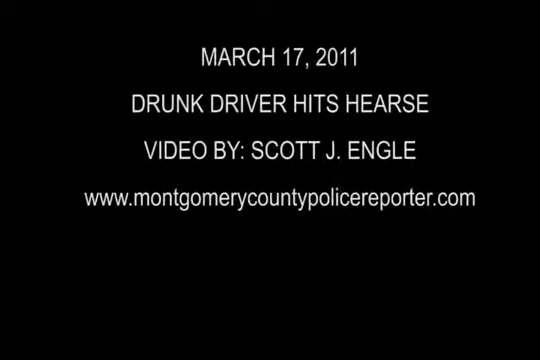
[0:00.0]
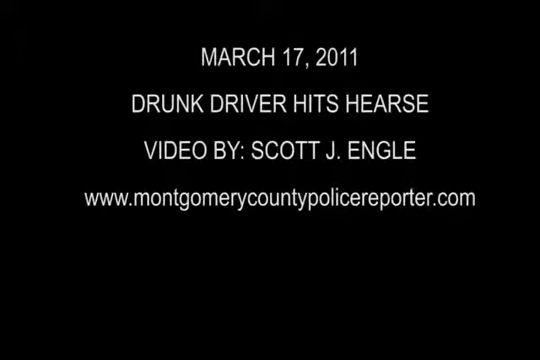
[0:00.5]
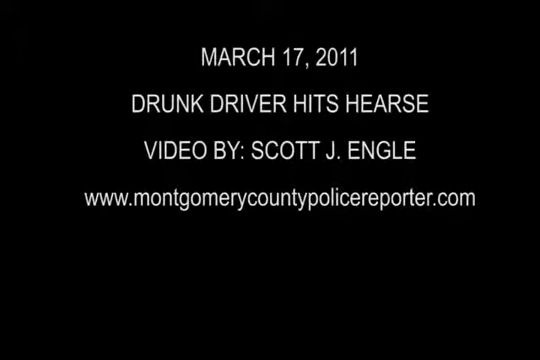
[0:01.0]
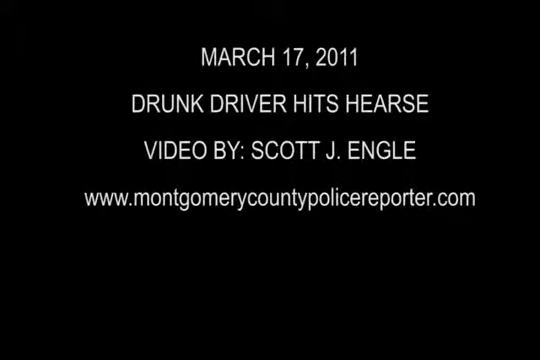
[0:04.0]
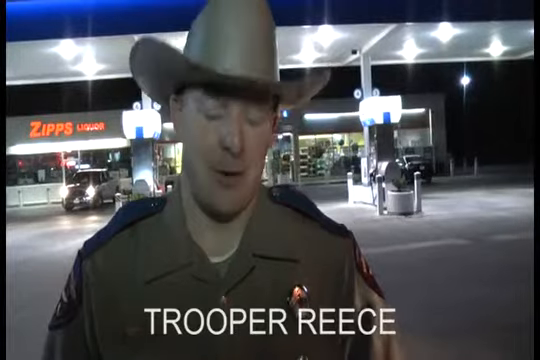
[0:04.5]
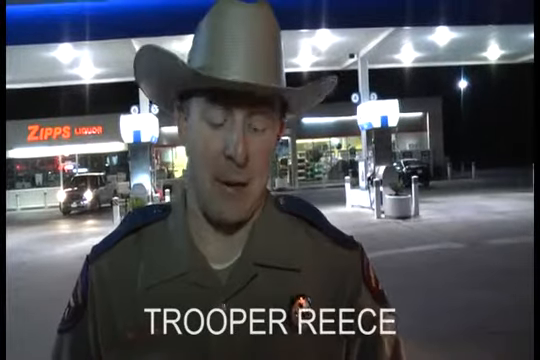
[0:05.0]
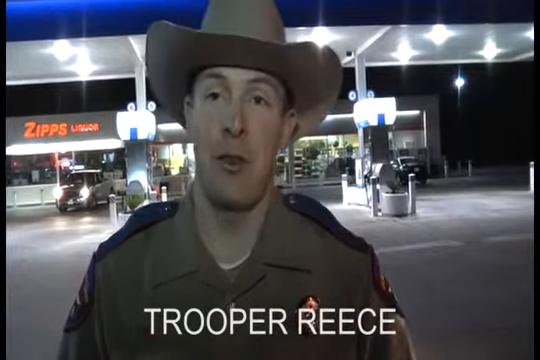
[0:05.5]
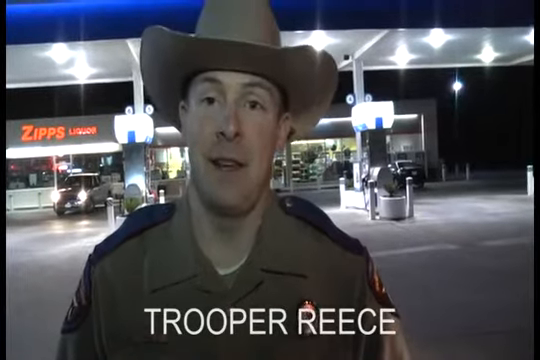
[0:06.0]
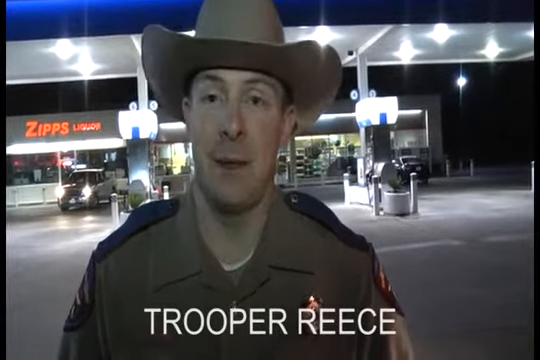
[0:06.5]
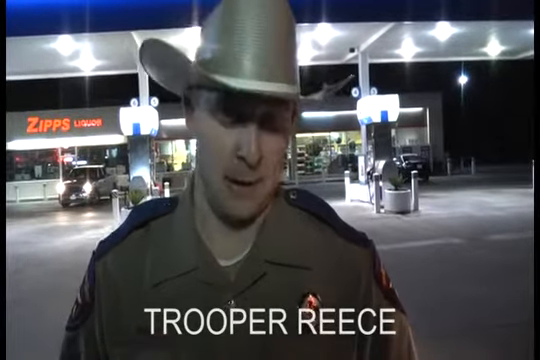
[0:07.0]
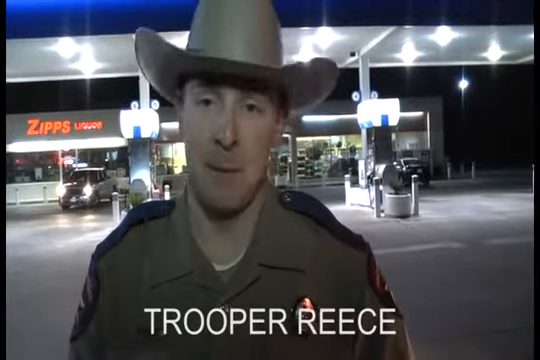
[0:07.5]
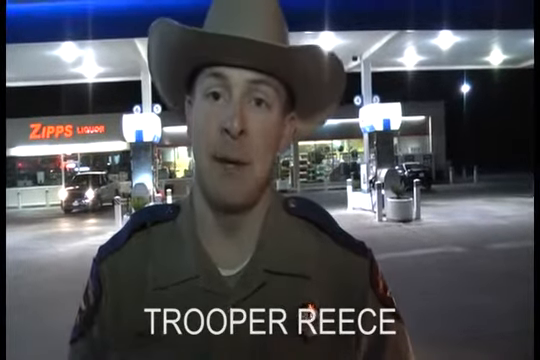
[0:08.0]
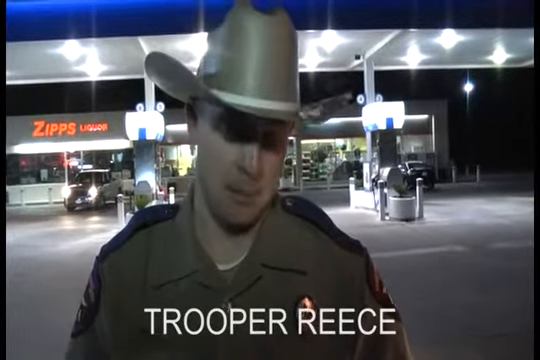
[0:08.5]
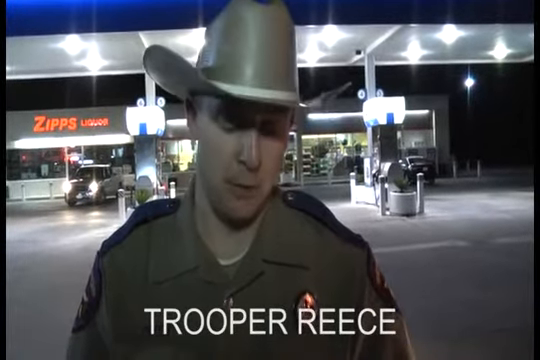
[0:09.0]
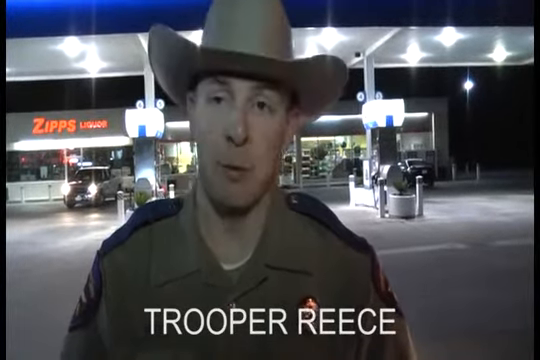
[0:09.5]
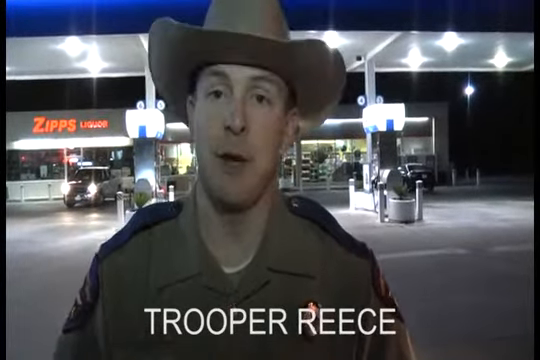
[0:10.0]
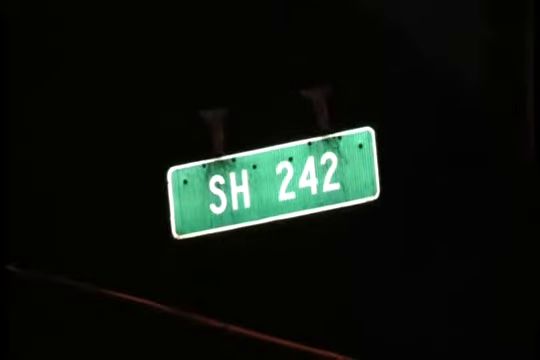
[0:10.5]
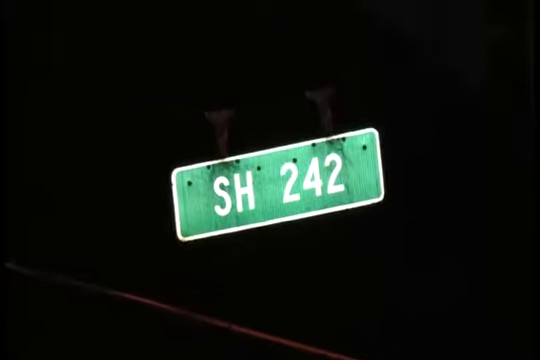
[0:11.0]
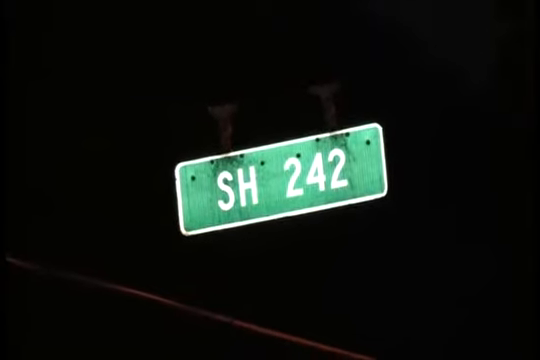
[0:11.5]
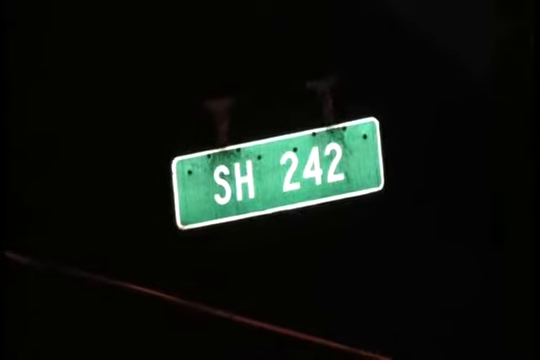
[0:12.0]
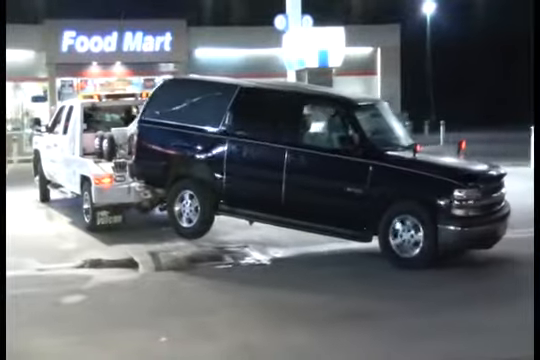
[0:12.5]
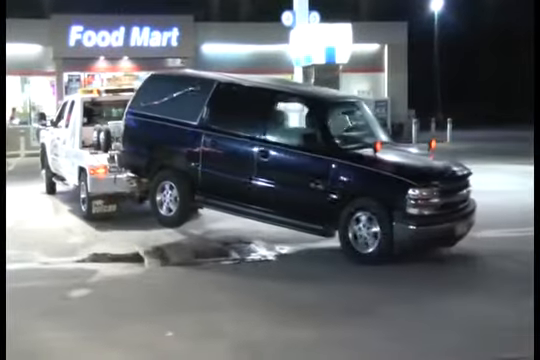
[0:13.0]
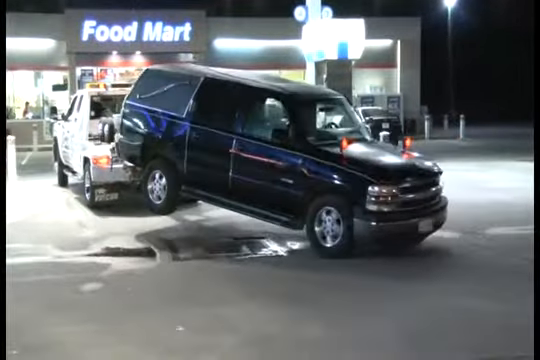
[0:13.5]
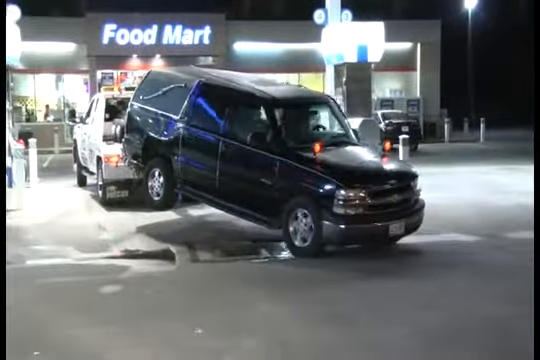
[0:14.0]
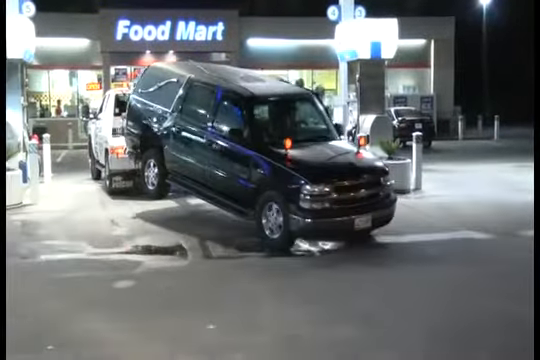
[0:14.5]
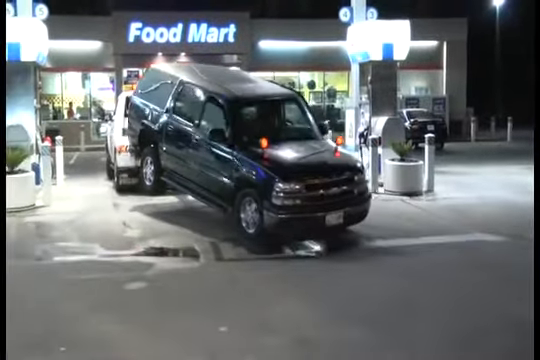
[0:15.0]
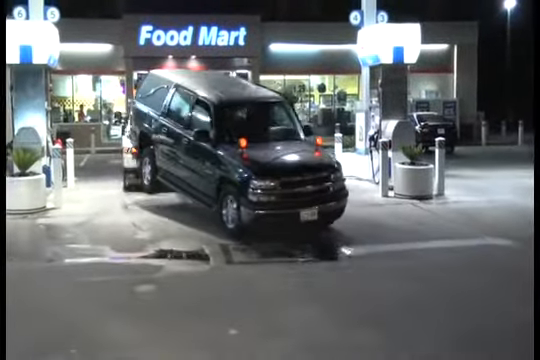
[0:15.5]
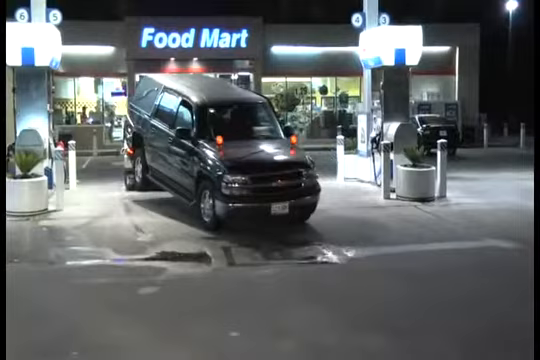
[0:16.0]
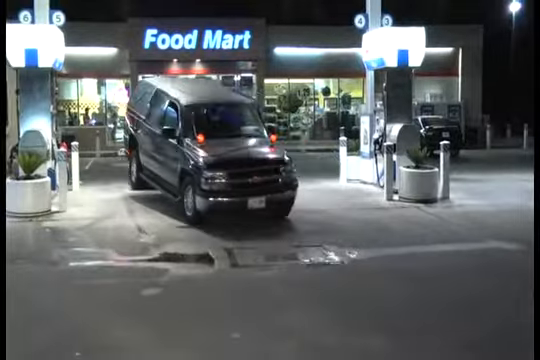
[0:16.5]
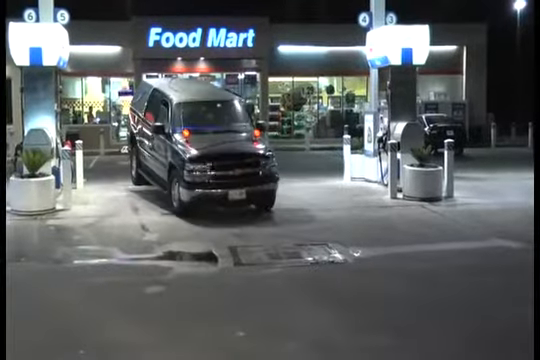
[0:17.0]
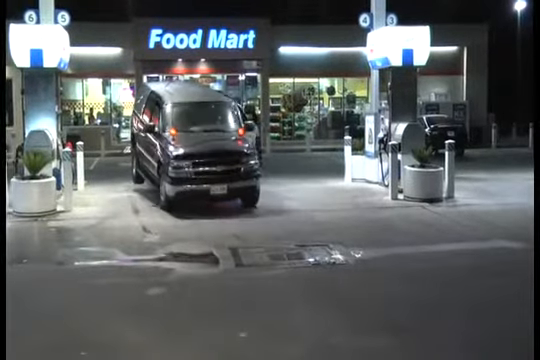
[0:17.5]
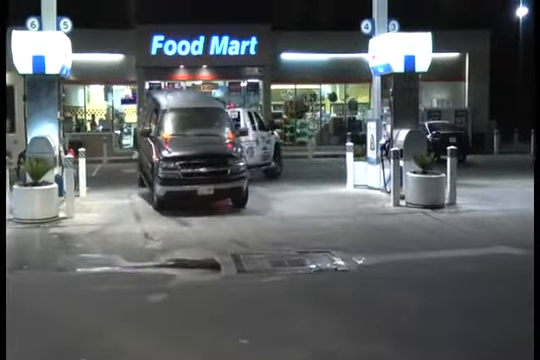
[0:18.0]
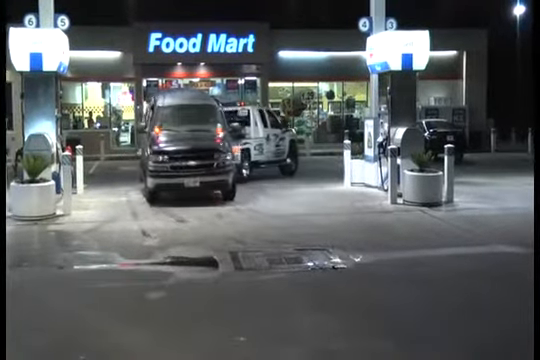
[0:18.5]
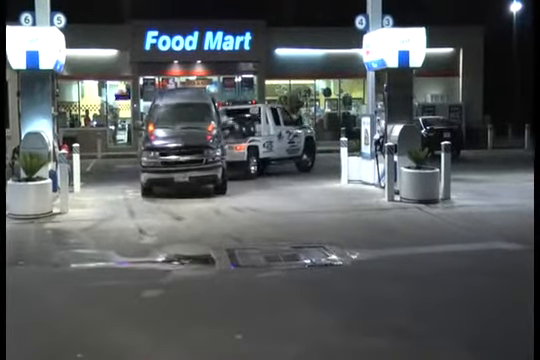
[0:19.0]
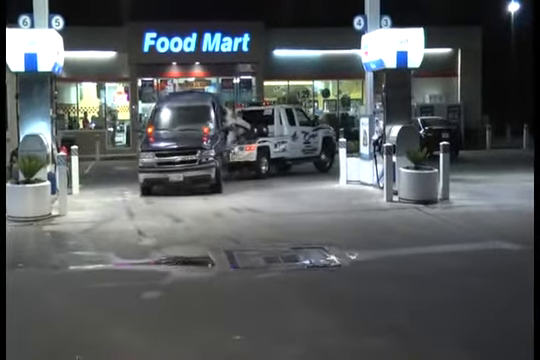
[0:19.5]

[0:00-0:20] White text typed against a black background gives the topic of the video: "March 17, 2011, drunk driver hits hearse." A video credit follows, "video by Scott J Engel," and below it is a link to a website, "www.montgomerycountypolicereporter.com." The video cuts to a policeman in a police uniform and a cowboy hat, Trooper Reese, being interviewed at a gas station at night. In the background the gas station lights are on, and there is a liquor store called "Zips Liquor." He looks straight at the camera as he speaks, then looks downwards, then looks up, back at the interviewer. He blinks, looks at the ground again, then looks back at the camera, moving his head as he speaks. The video then cuts to a pickup truck towing a black car at the gas station; the car is being towed in reverse.